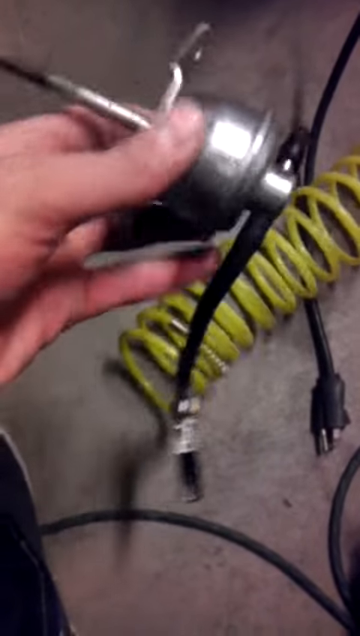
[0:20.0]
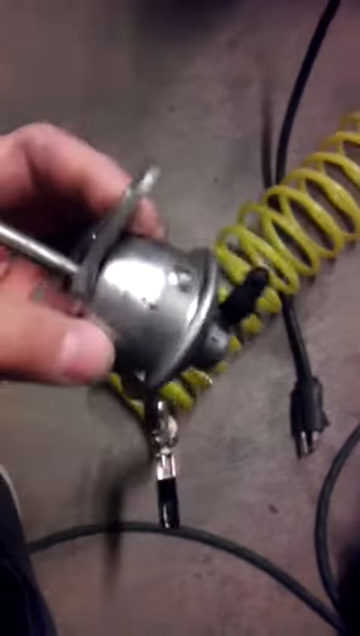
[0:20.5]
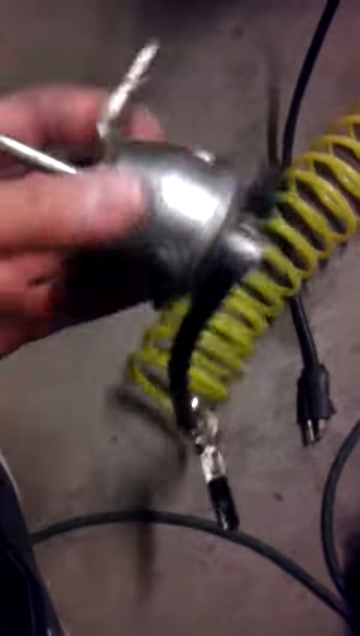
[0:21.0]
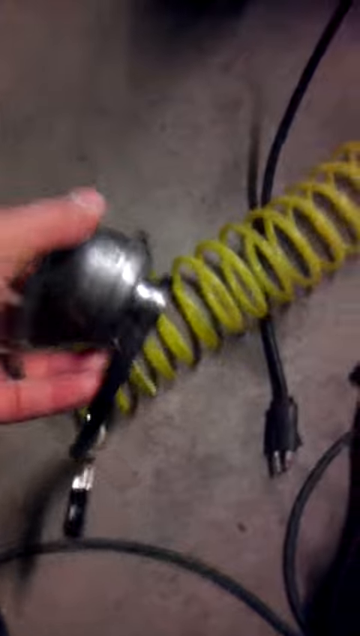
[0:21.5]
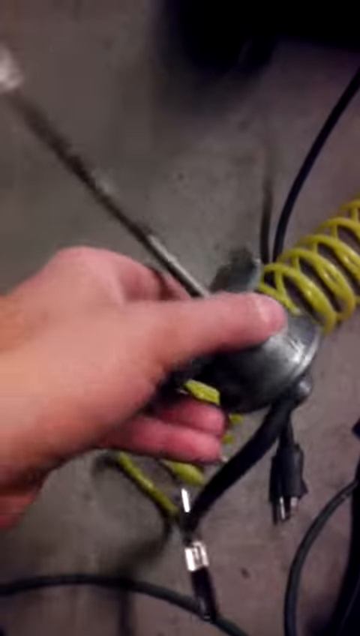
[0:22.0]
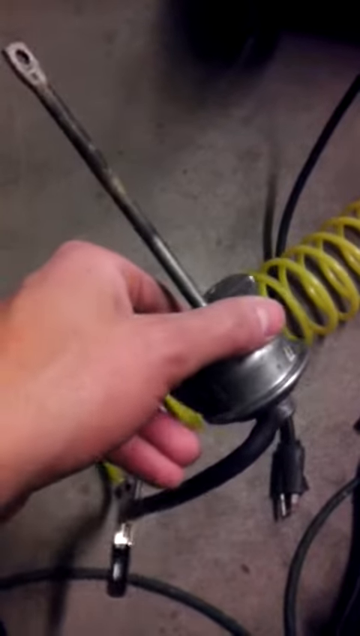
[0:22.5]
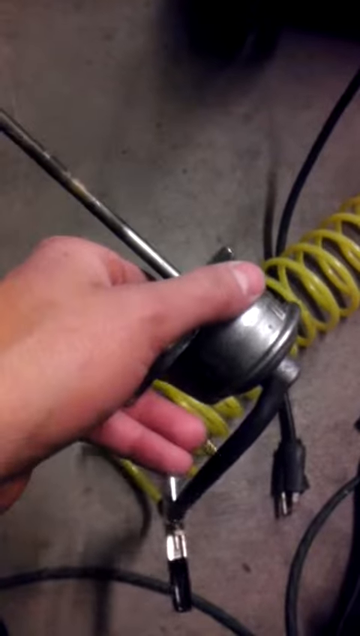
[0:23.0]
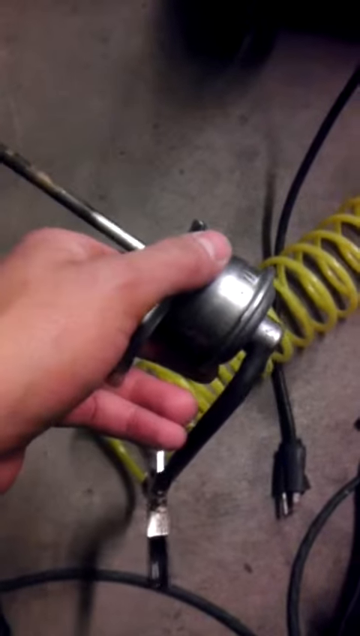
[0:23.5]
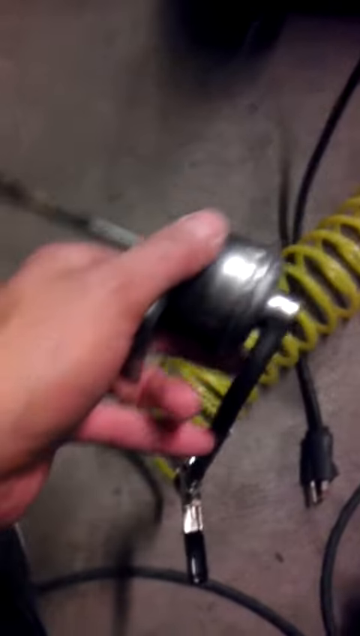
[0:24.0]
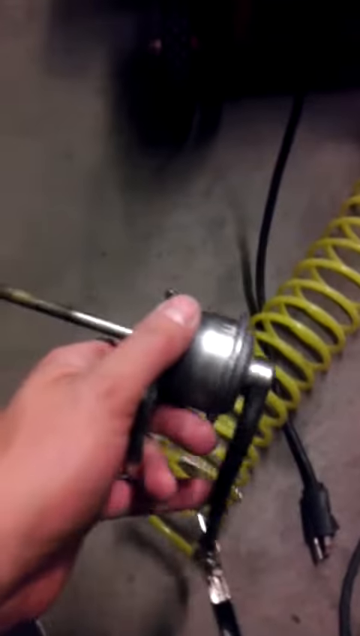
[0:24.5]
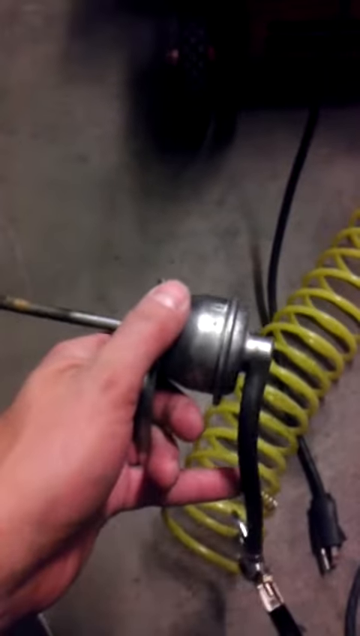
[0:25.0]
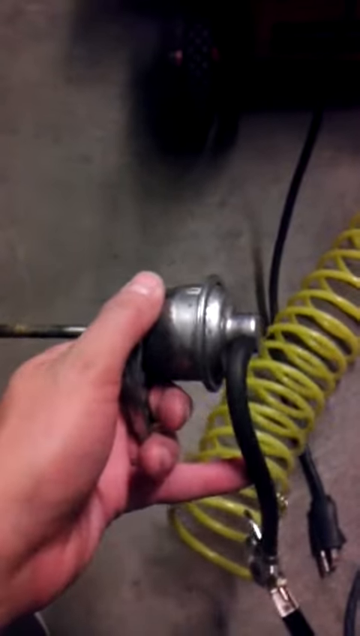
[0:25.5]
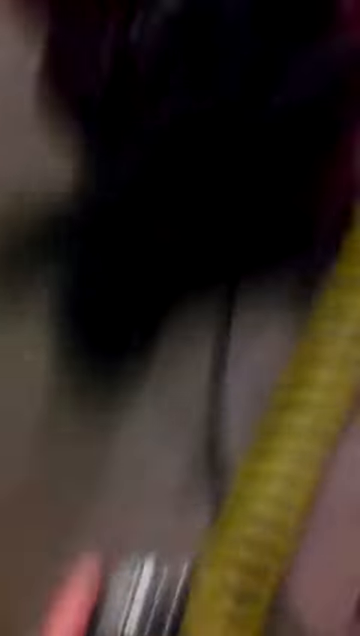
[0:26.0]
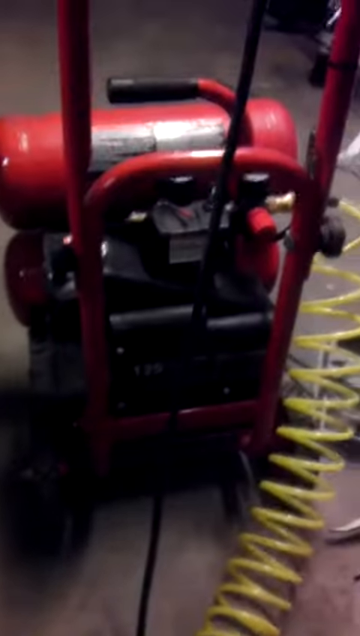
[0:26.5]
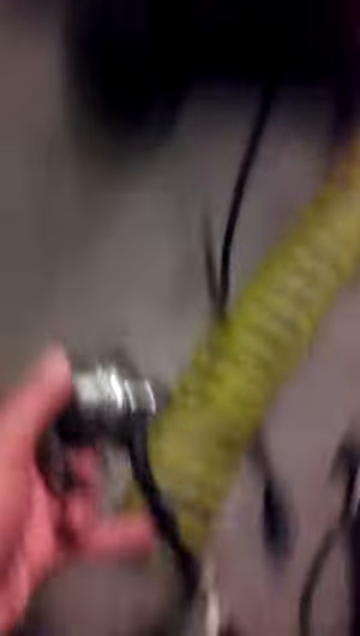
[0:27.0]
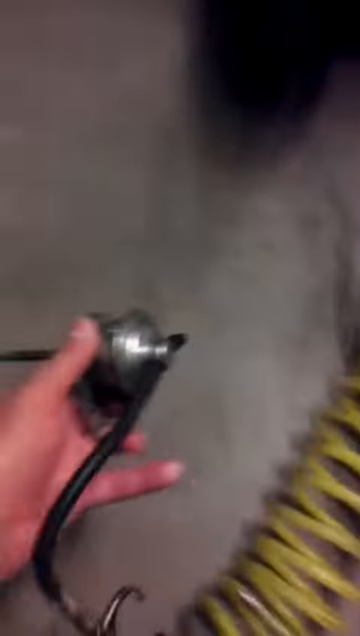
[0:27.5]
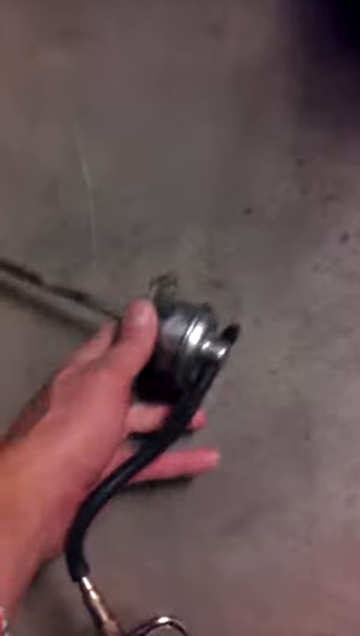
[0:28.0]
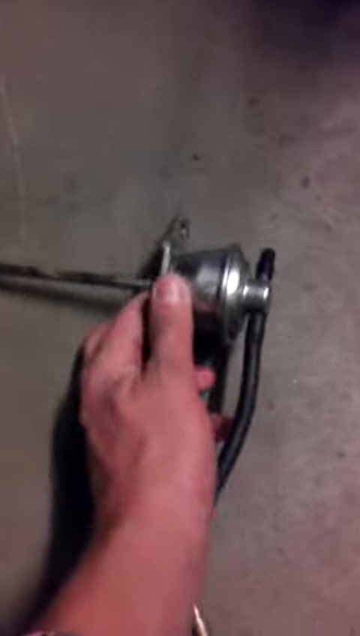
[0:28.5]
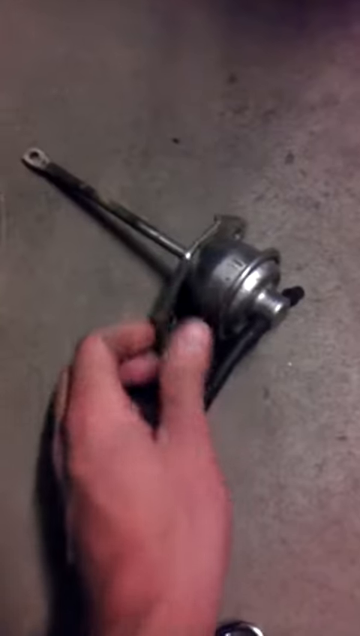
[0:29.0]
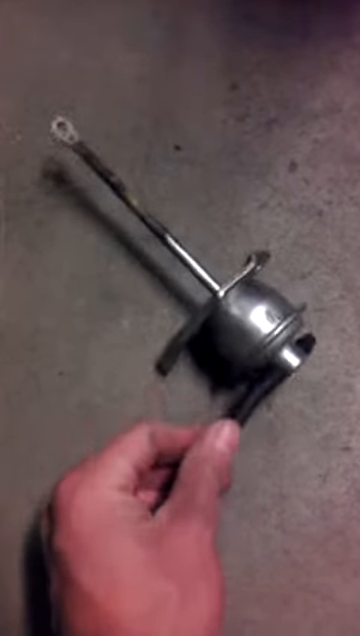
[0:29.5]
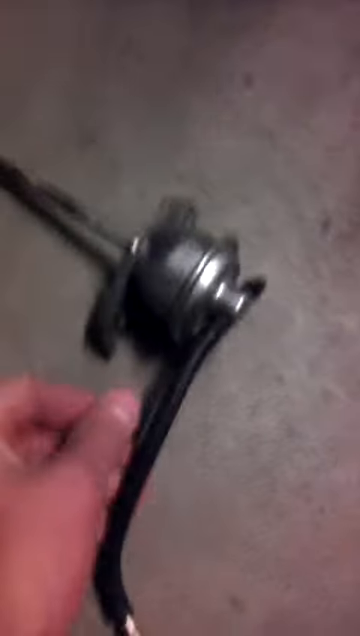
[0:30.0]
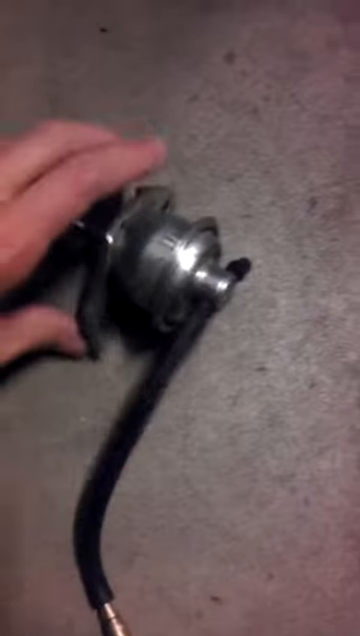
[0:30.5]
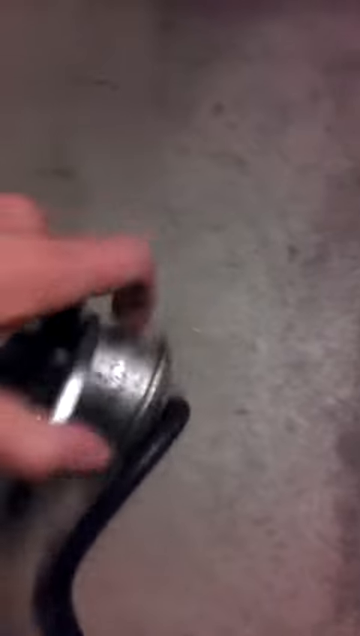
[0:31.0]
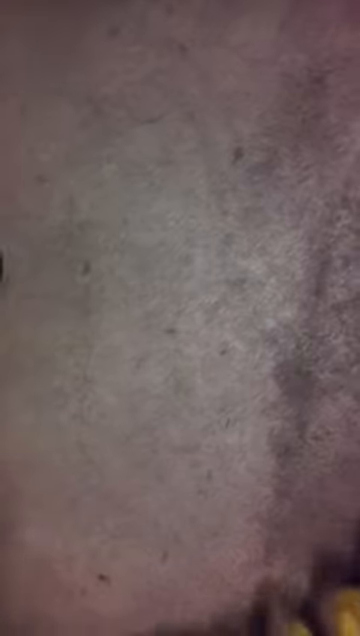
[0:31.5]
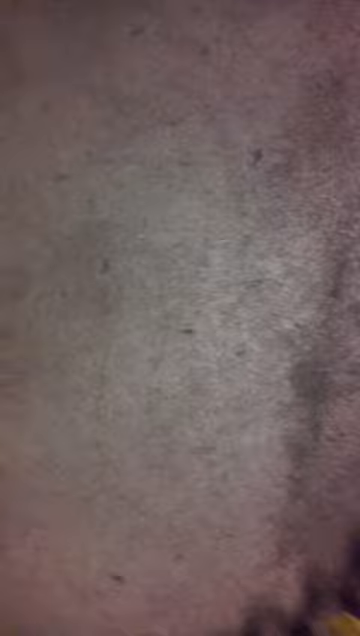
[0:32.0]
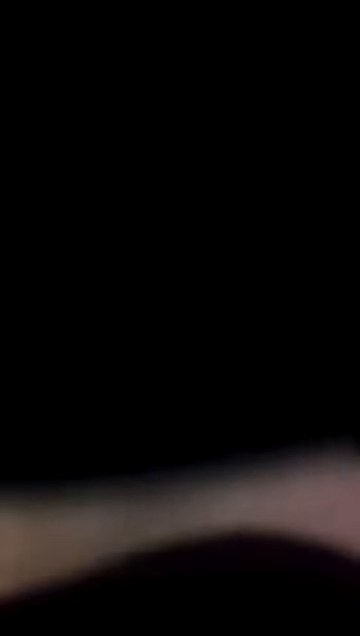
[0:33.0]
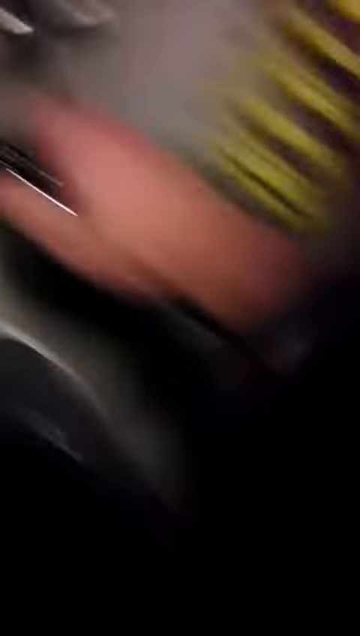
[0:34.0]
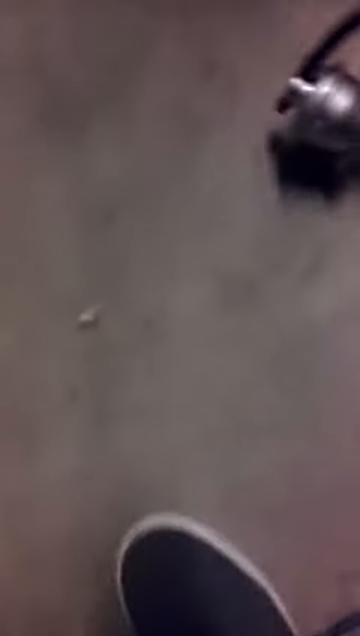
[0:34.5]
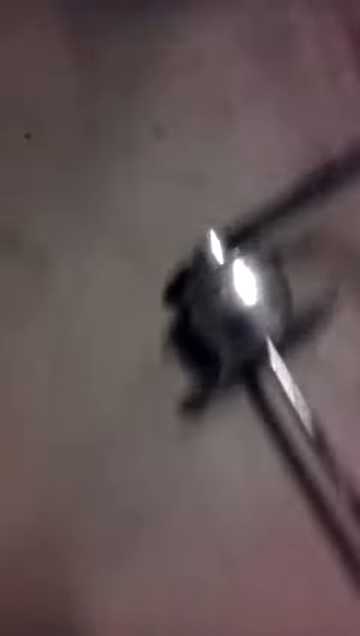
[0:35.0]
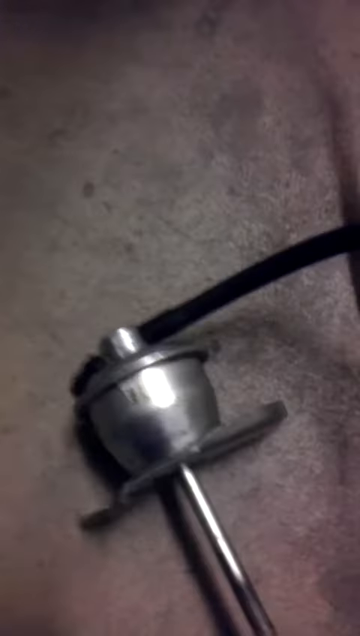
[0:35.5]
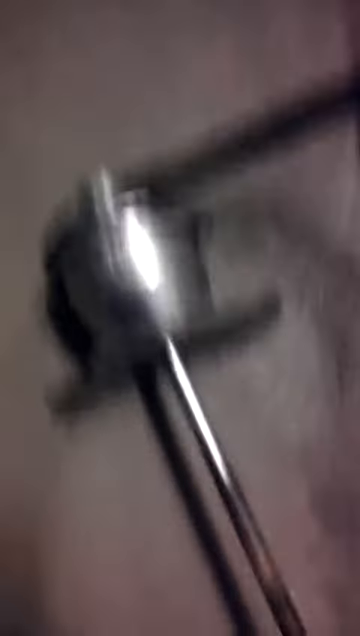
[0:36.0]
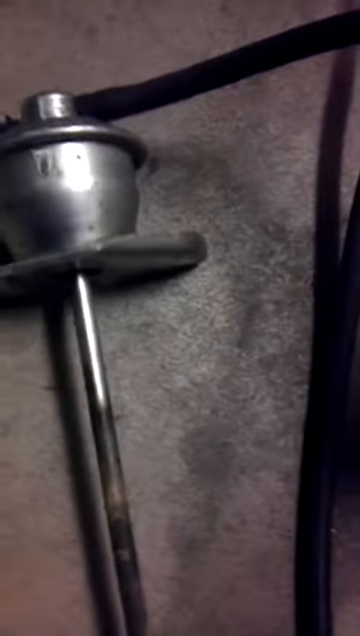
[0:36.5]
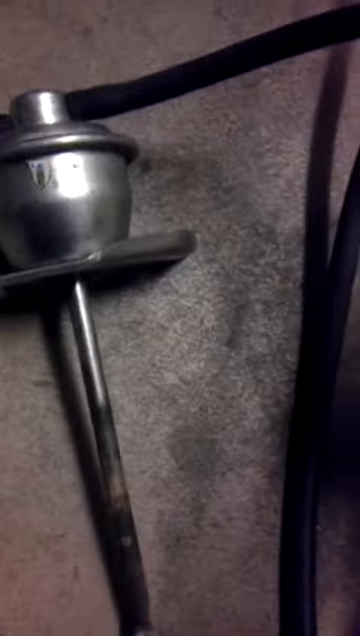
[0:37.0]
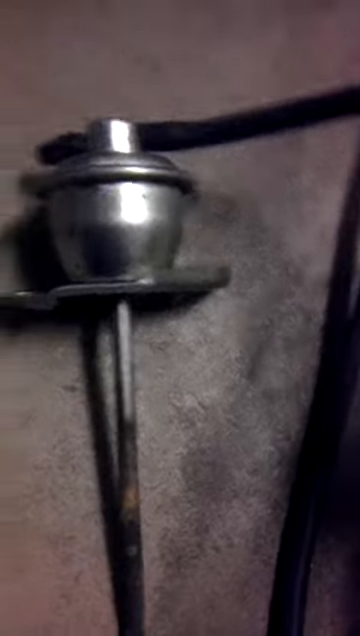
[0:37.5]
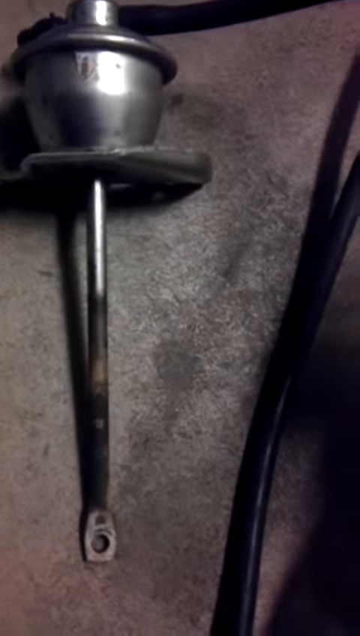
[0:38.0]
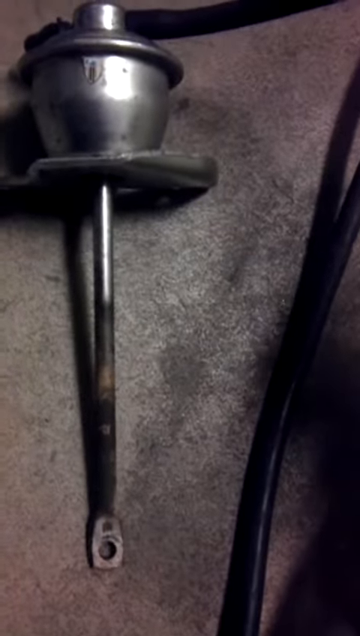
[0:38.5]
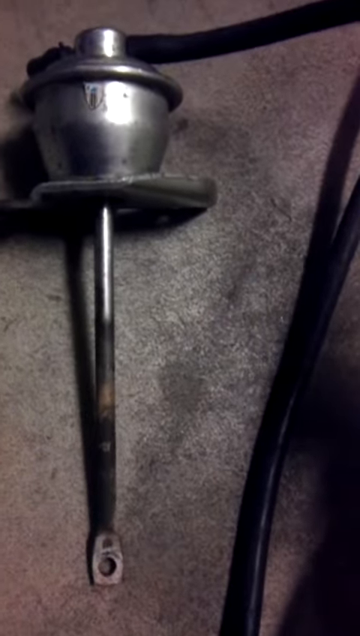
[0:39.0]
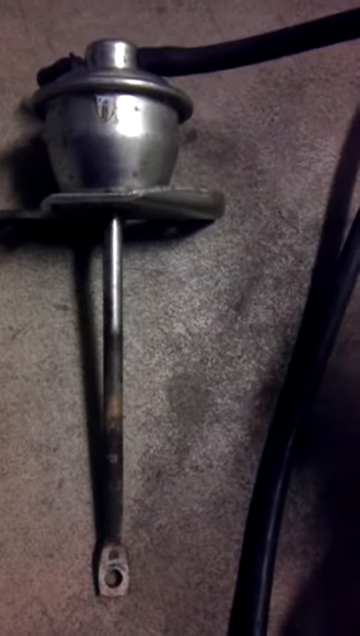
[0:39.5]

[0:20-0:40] The man continues showing the metal piece and touches the black cord that connects the metal device to the yellow coiled cable. He briefly pans to show a red mechanical device that looks like a compressor, and the yellow cable looks like a compressor cable. The ground seems to be concrete pavement, possibly in a garage, though it is hard to tell because the video is very zoomed in. The footage is very poor quality and he does not pan around much. He seems to struggle with recording and briefly sets the phone or recording device down, possibly on his leg, as the video goes black quite often and nothing can be seen.